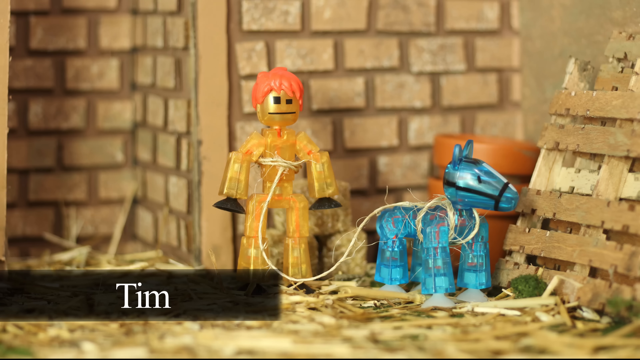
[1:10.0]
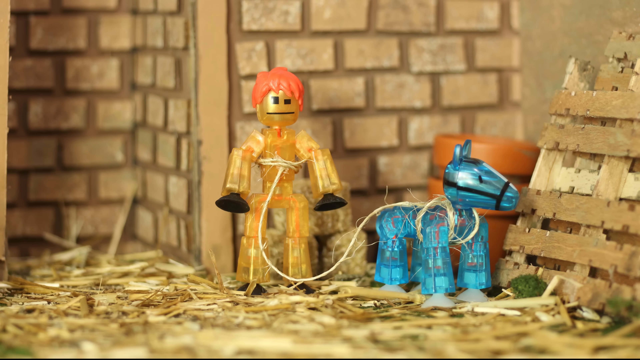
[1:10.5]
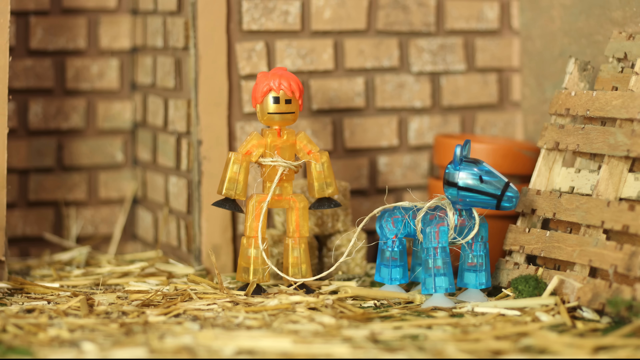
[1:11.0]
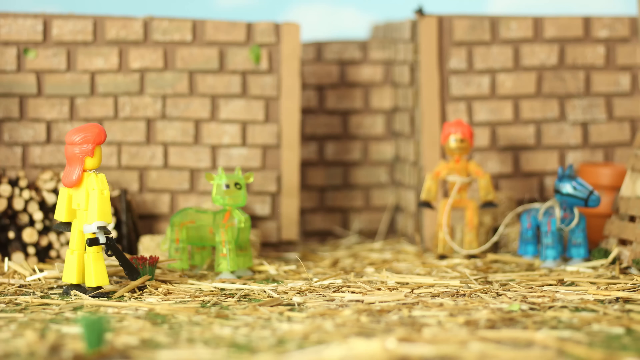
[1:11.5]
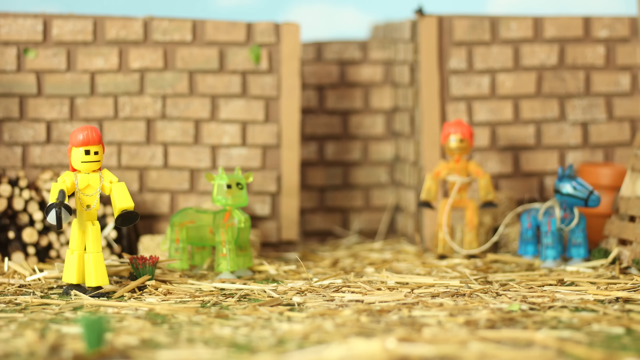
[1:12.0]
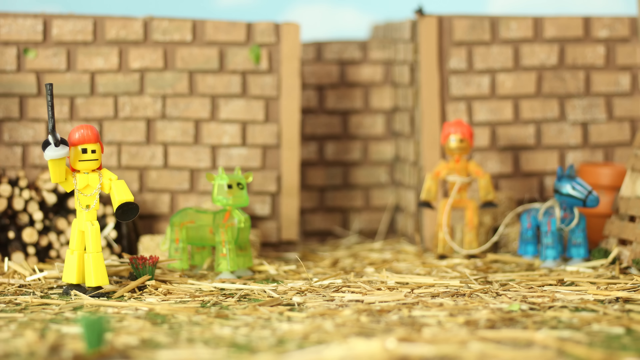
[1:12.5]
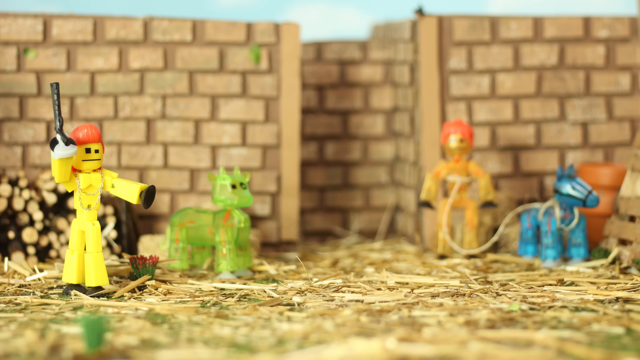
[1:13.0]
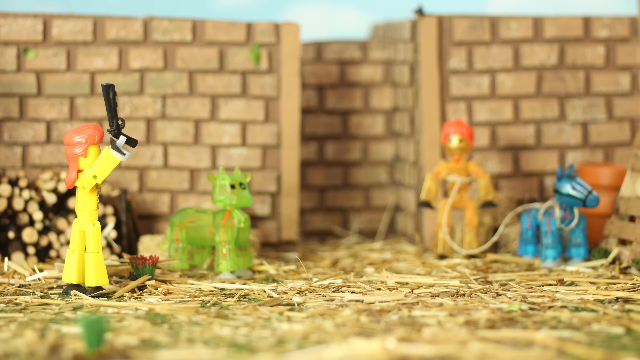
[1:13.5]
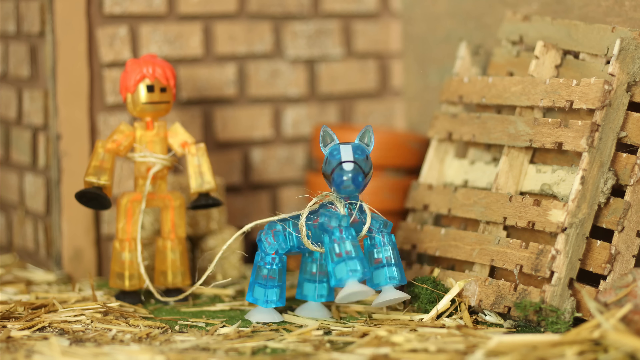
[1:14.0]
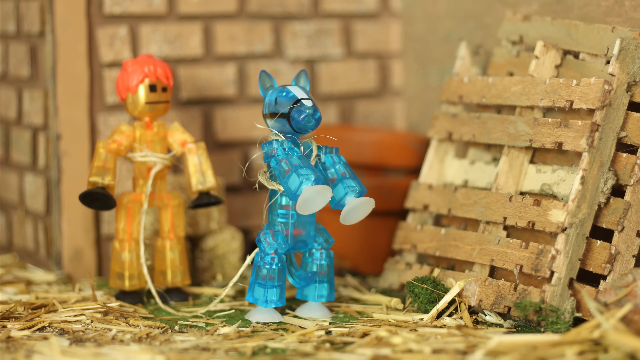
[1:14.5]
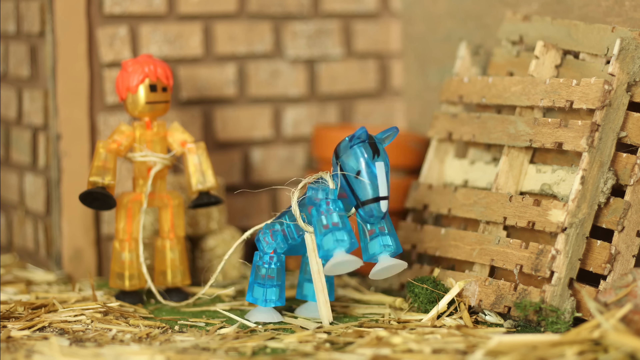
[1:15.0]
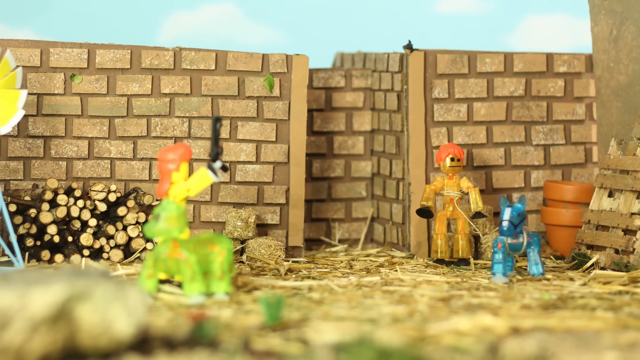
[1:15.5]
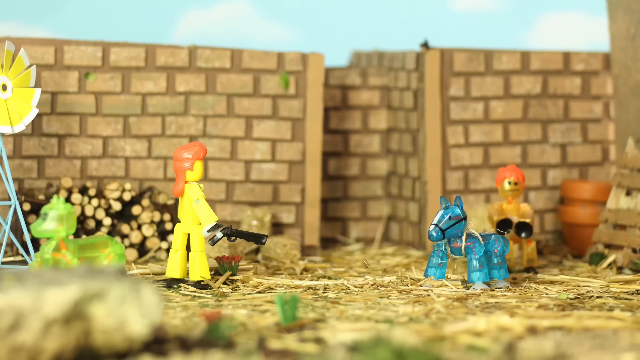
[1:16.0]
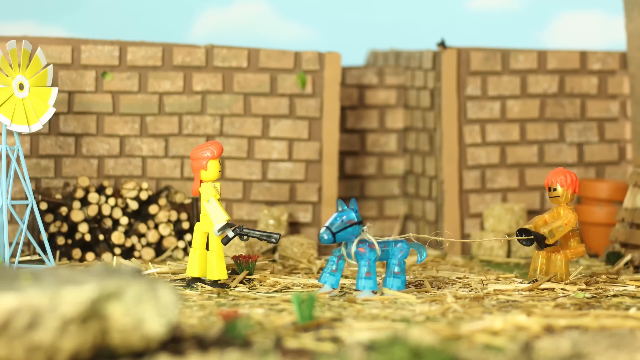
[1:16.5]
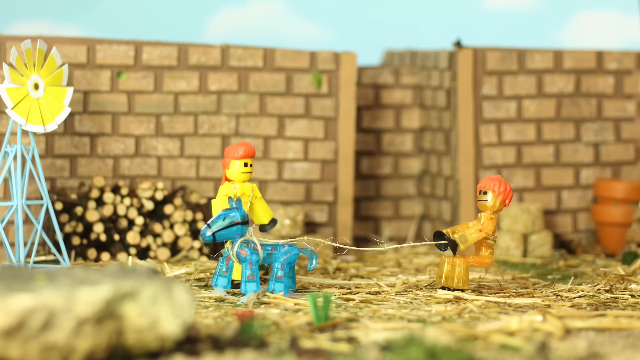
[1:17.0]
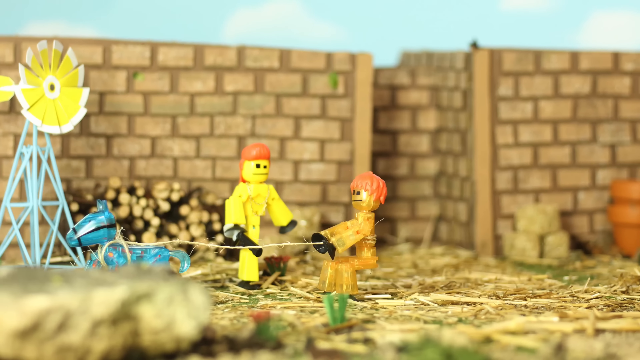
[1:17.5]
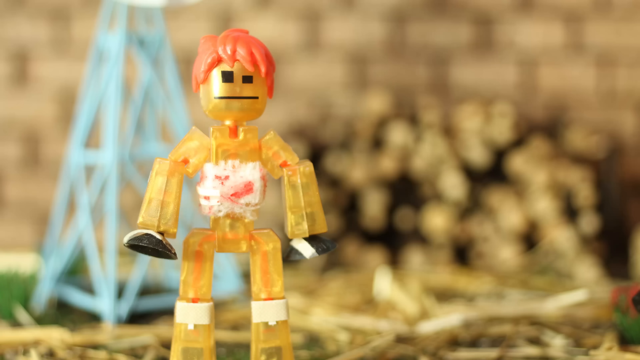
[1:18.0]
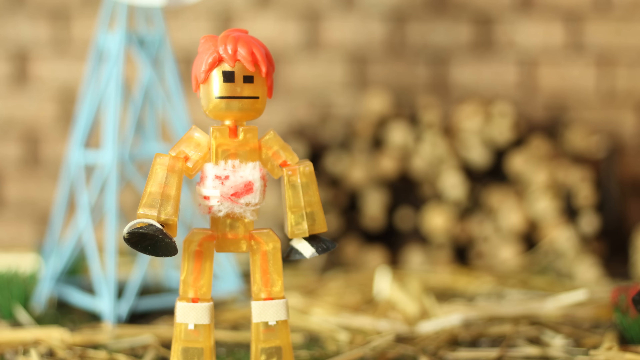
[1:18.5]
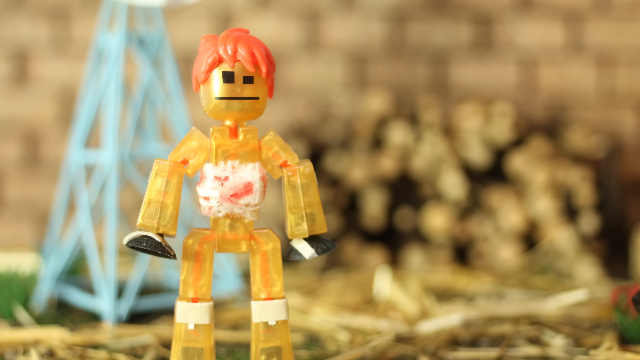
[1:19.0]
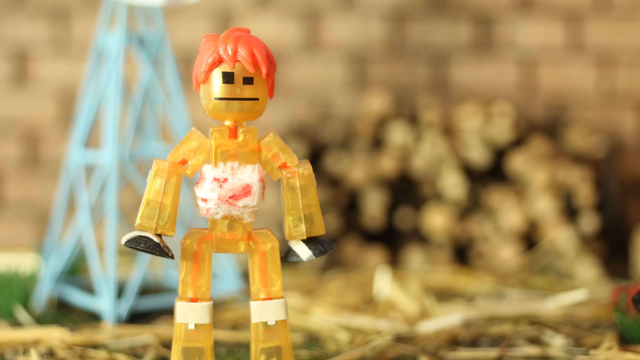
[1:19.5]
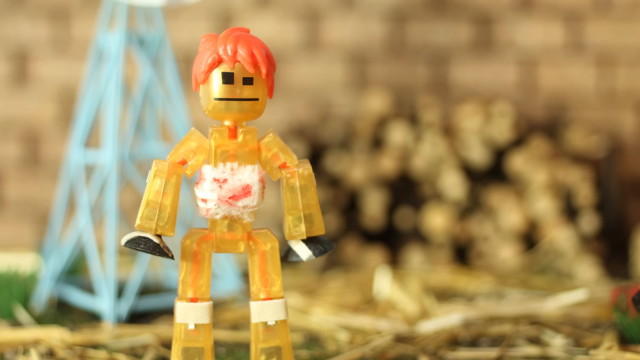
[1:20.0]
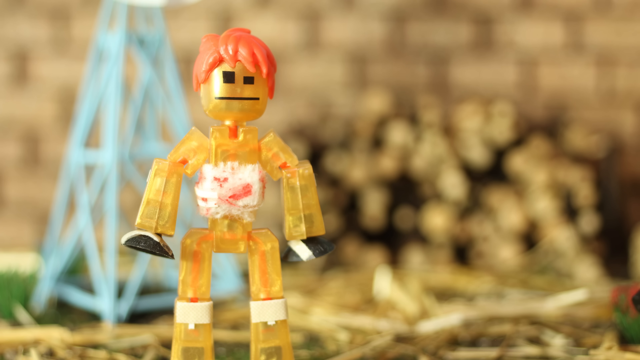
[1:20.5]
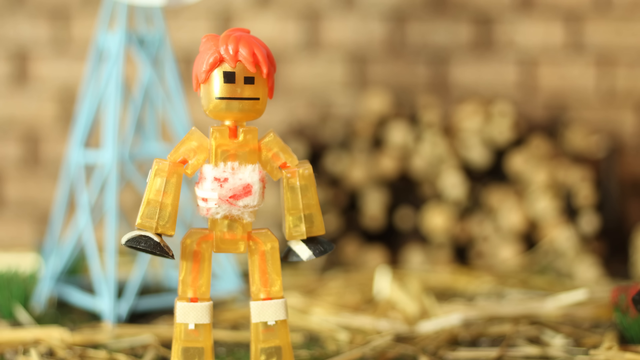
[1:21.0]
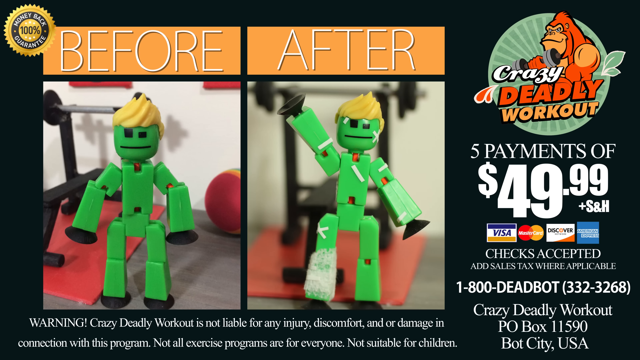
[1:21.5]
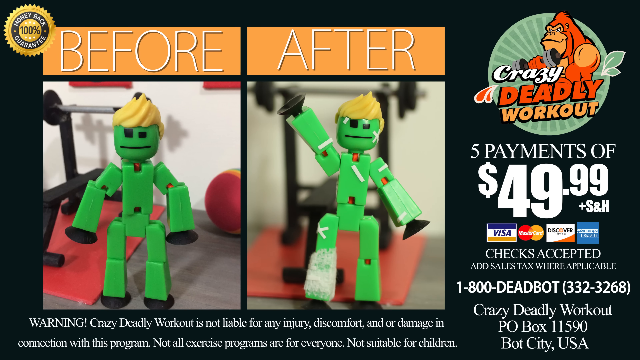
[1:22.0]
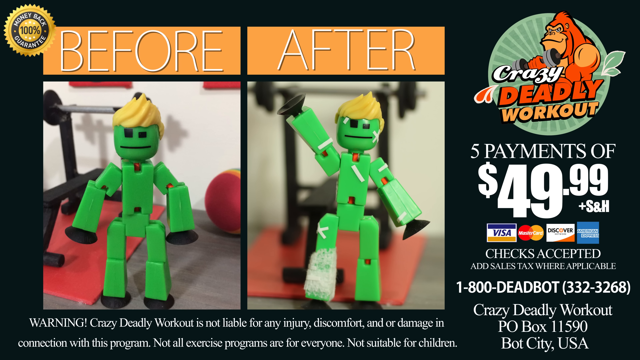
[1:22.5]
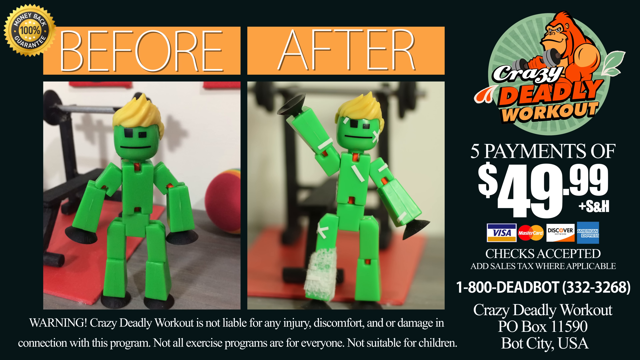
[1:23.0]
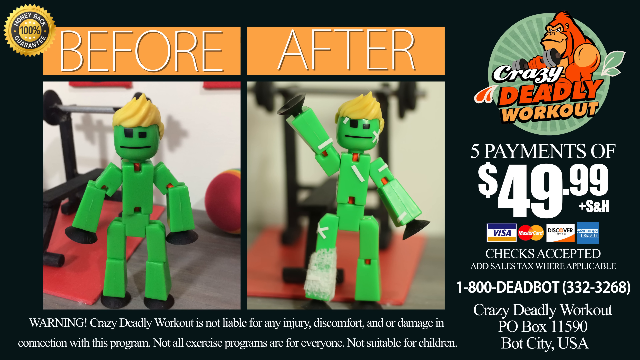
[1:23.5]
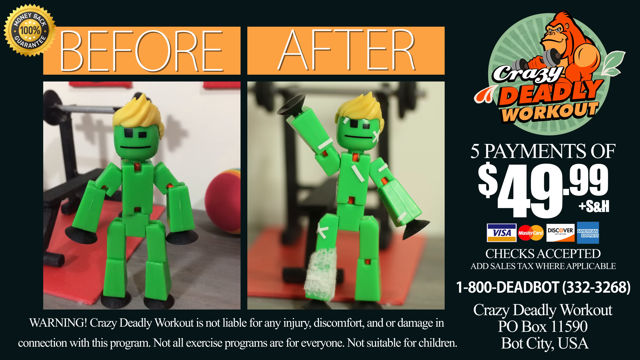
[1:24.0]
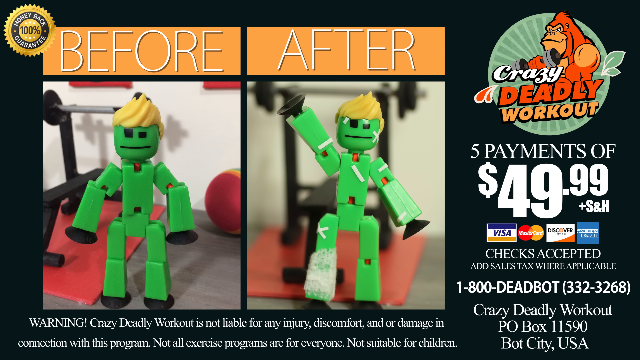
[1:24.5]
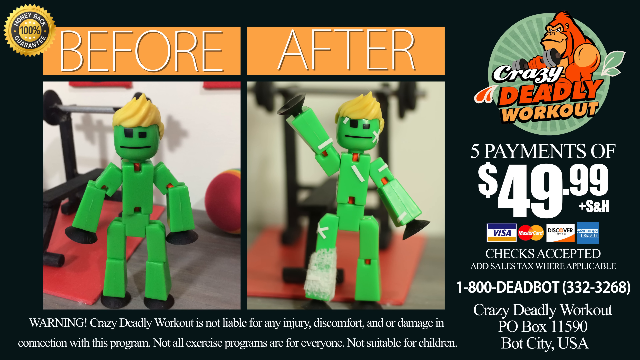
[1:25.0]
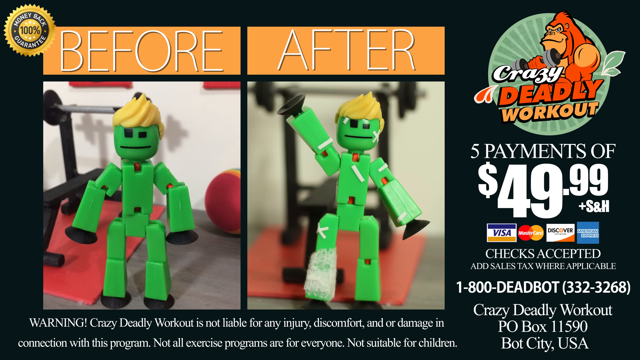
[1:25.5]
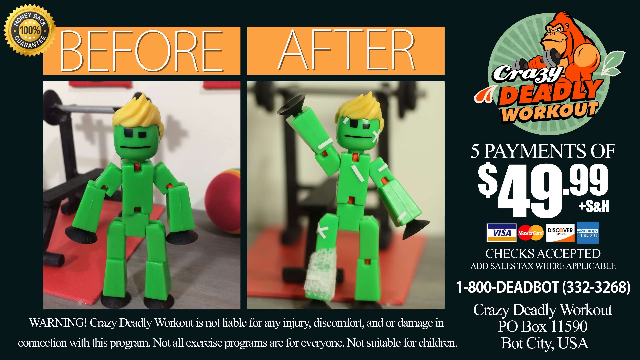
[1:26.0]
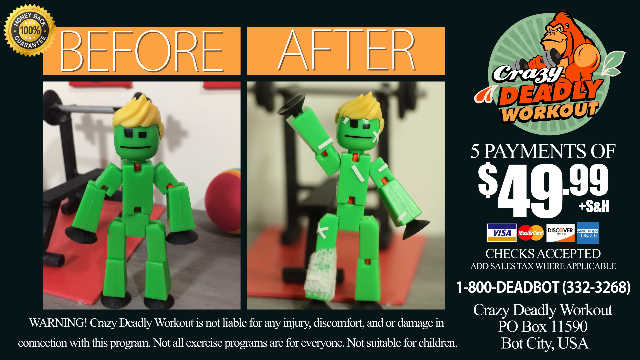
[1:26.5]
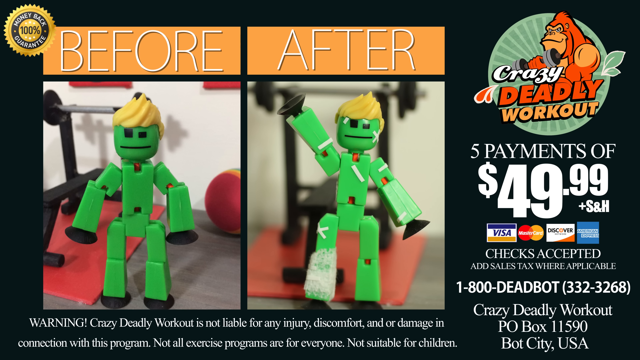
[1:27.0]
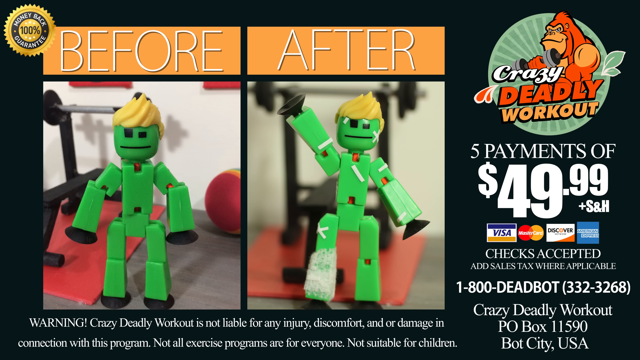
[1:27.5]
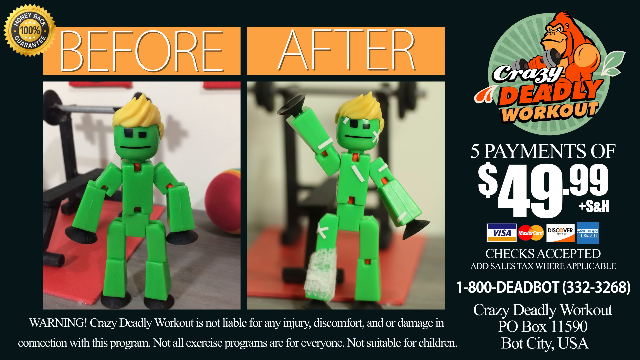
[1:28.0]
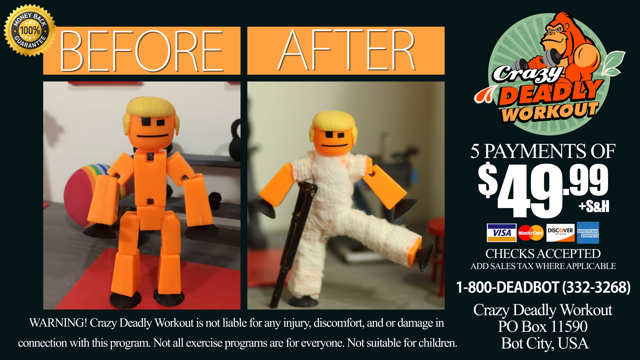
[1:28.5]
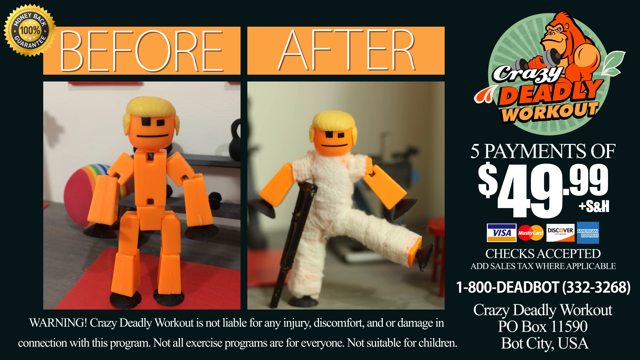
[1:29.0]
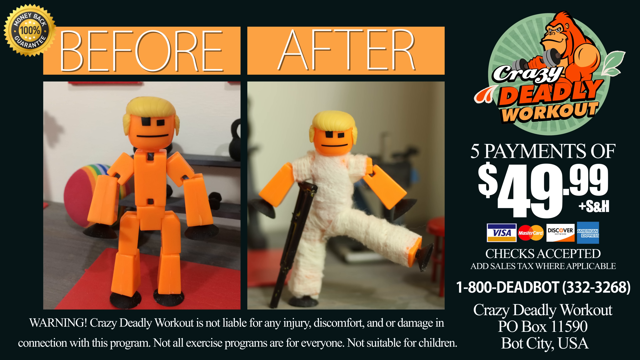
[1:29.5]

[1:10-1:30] One of the Lego people has a gun; he puts the gun up in the air and all the people kind of take off. There is another guy. An ad-like segment shows five payments of $49.99 with a before and an after: a Lego guy with a good body, and next to it a Lego guy who is hurt and injured, maybe with a cast on. A Lego figure named Tim has something like a leash around his waist that goes to the dog as the dog's leash. They appear to be outside, with wood pallets, brick walls, a windmill and some straw, almost like a farm. The hurt one seems to have something on his belly.